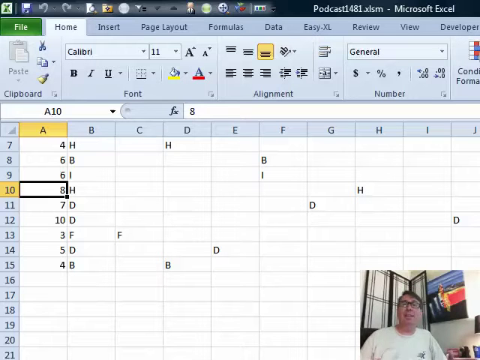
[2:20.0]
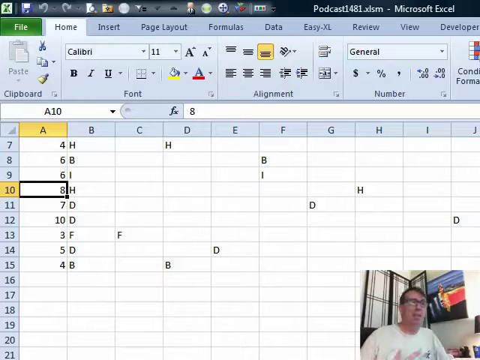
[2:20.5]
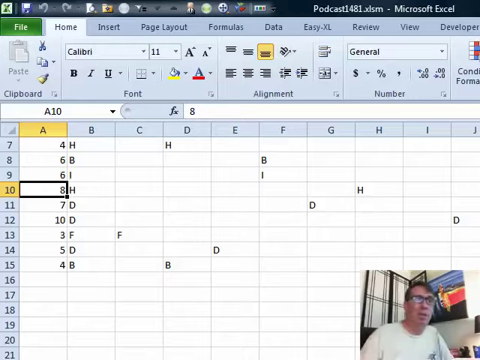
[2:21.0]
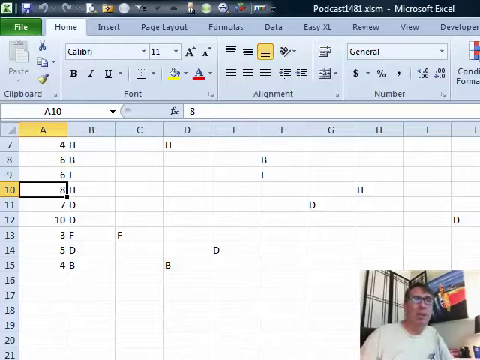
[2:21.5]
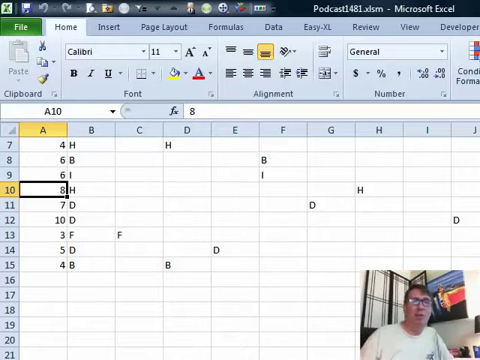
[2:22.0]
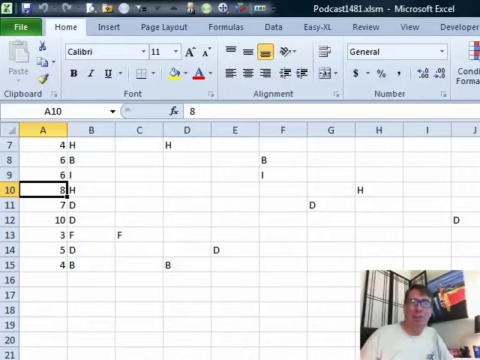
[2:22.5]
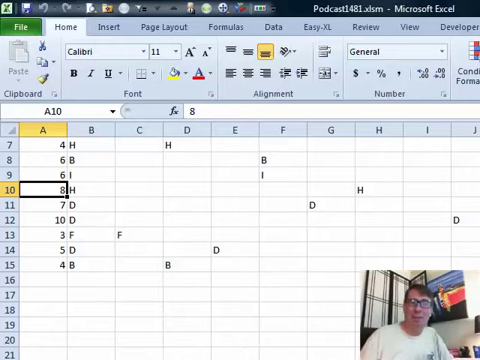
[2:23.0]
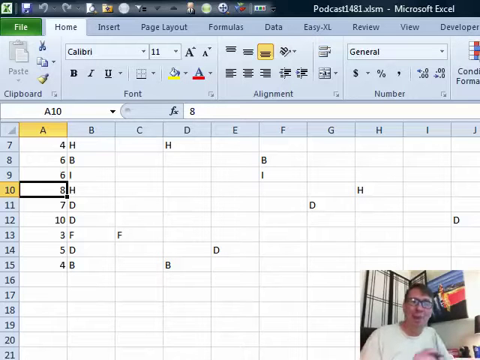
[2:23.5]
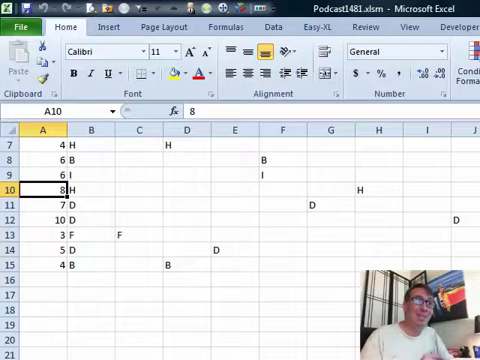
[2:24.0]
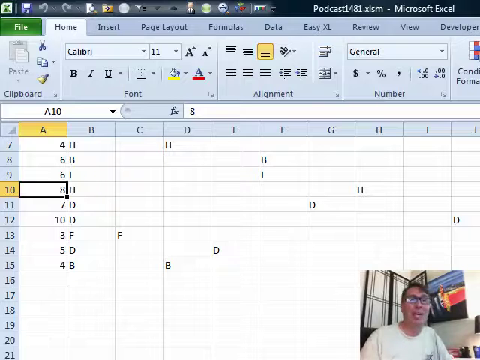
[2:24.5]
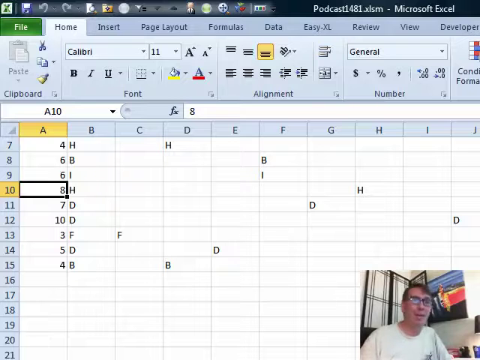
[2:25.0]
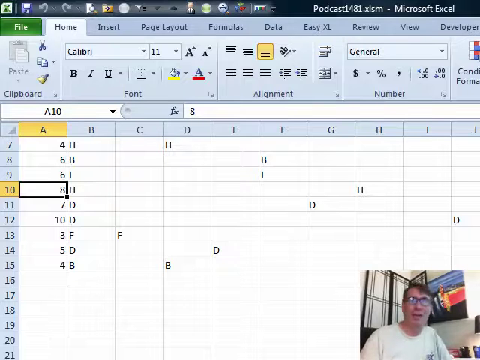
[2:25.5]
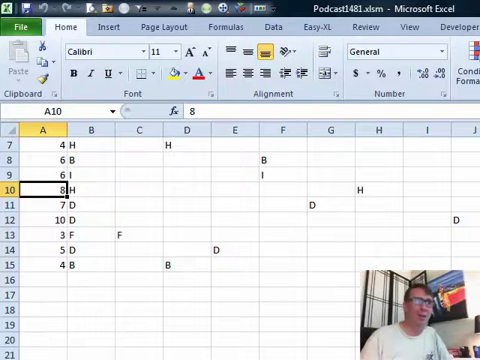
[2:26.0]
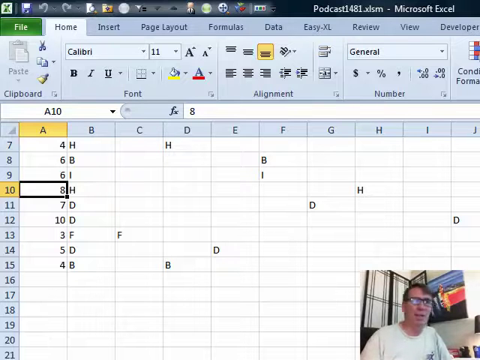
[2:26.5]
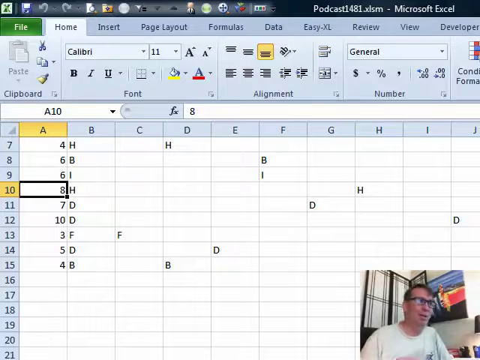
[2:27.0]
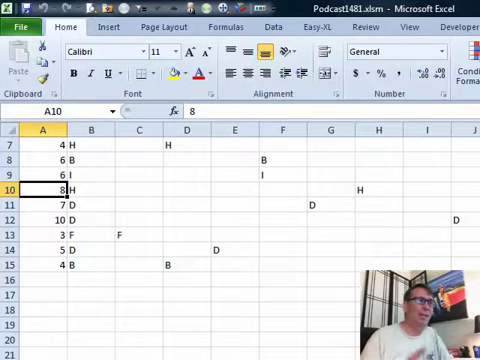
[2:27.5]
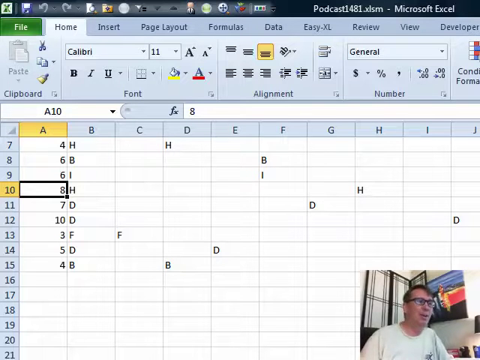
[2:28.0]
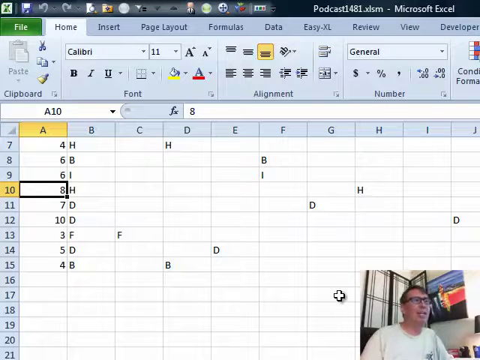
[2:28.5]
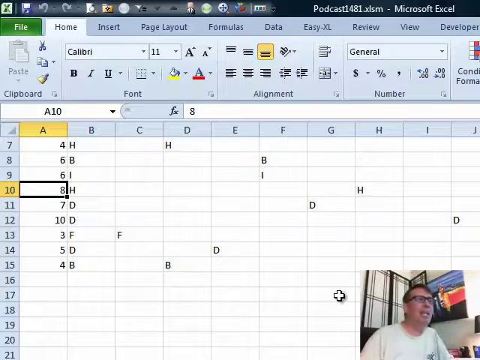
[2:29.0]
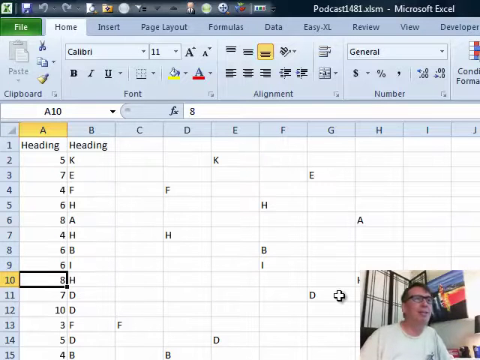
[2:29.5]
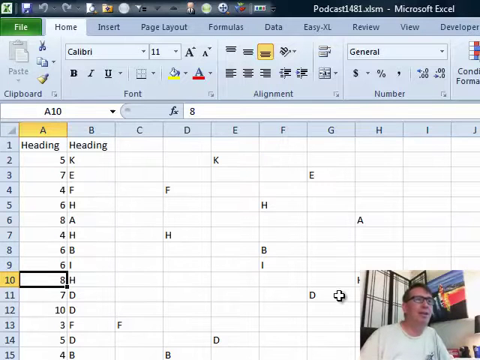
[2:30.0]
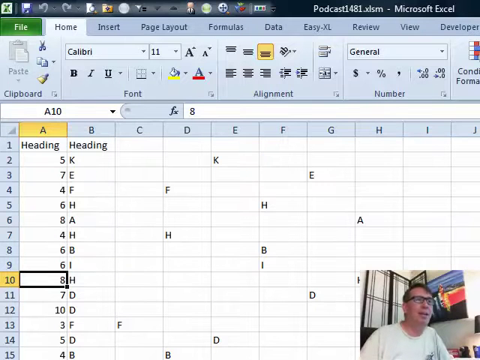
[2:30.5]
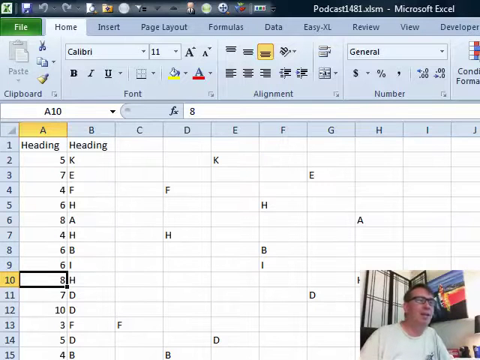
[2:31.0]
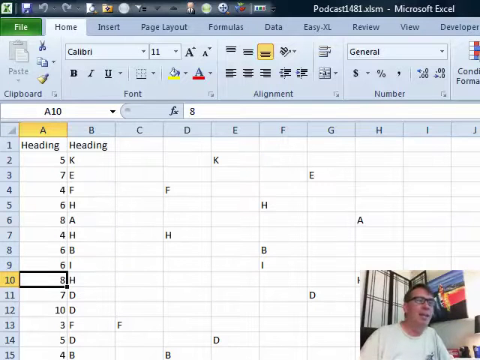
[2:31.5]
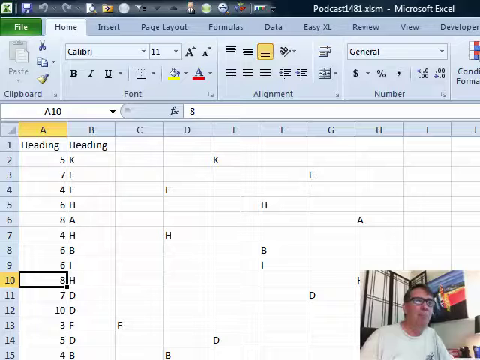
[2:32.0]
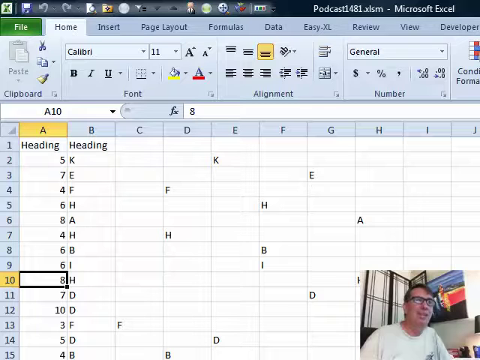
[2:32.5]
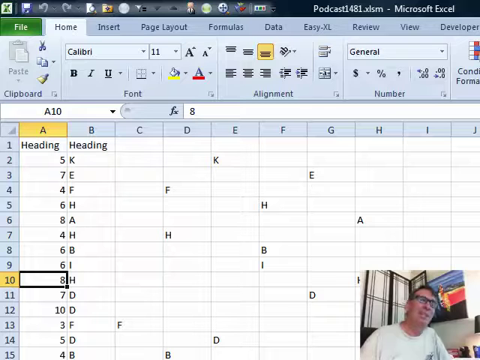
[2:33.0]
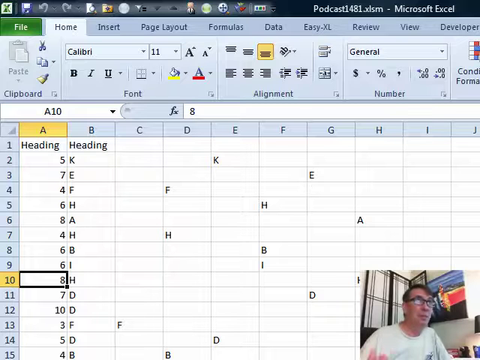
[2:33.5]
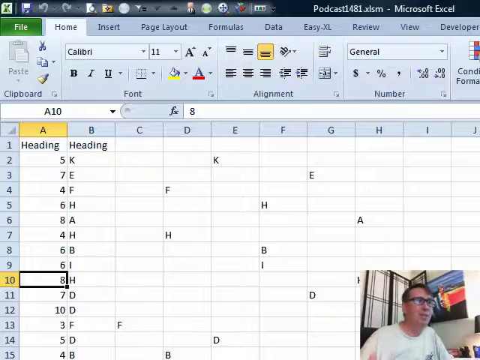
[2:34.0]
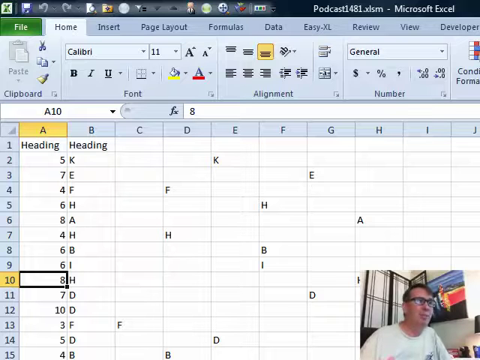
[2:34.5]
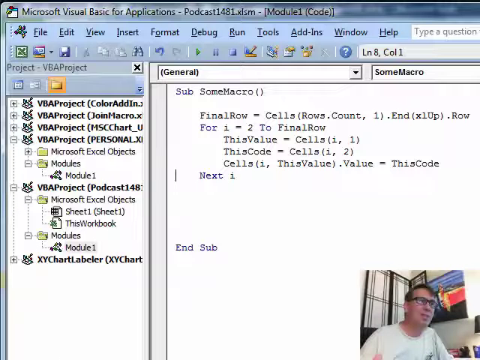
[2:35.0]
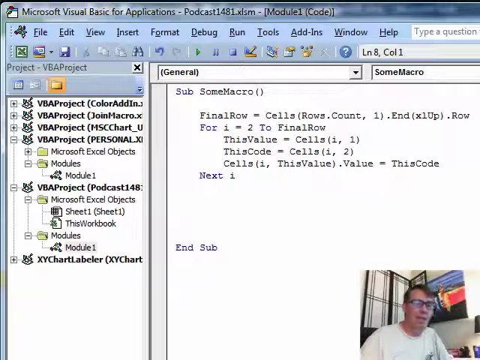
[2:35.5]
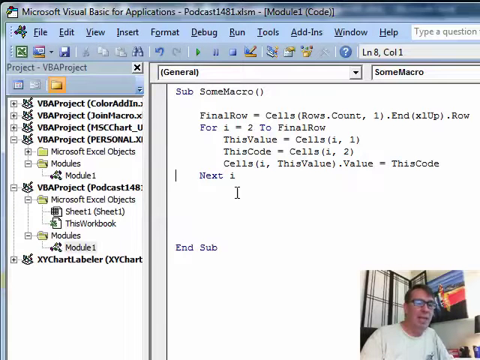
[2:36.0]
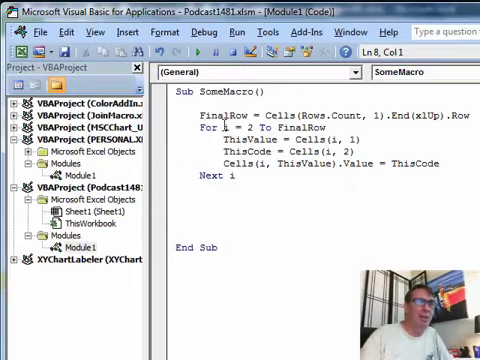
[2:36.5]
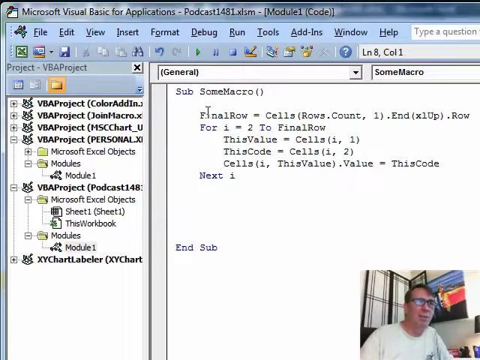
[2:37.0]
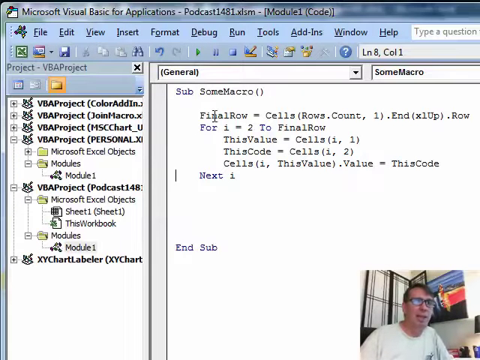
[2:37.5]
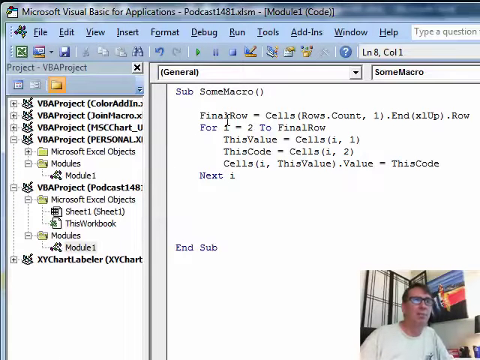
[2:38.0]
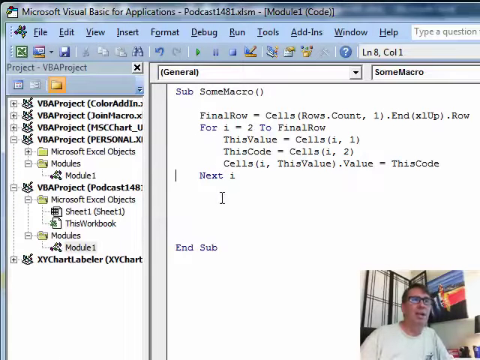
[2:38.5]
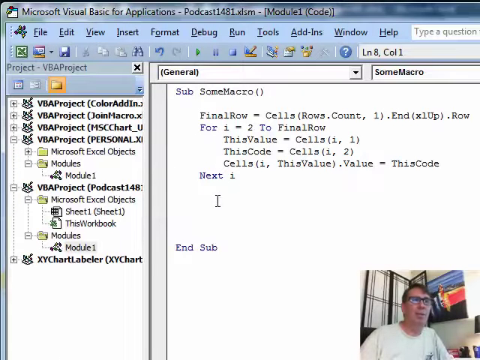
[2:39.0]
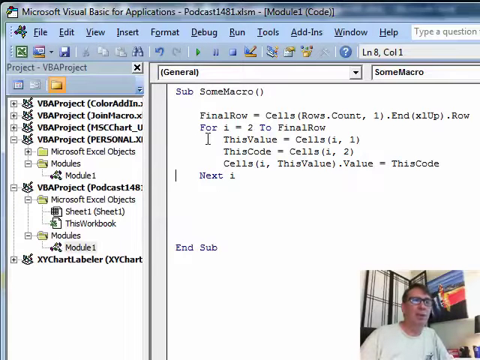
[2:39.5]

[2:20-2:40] The video starts on the spreadsheet, where letters are spread out across the different rows. Column A has numbers and column B has letters. Column A and row 10 are both highlighted in yellow. It seems that some columns are added and then rows are taken away. In a picture-in-picture at the bottom is the man teaching the Excel spreadsheet; he is white, with a white shirt, brown hair and black glasses, with a white-and-black divider behind him and a picture with blue, red and black on it. He talks as the cursor moves. The view goes back to the VBA project screen, where the cursor moves up and down, then returns to the spreadsheet, where some rows seem to be missing.